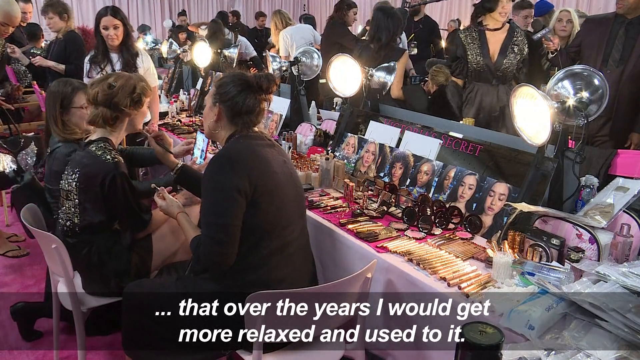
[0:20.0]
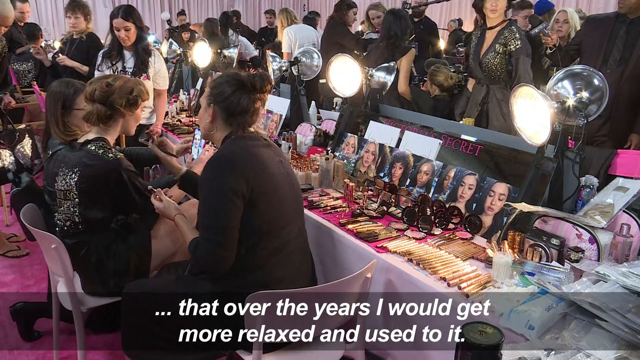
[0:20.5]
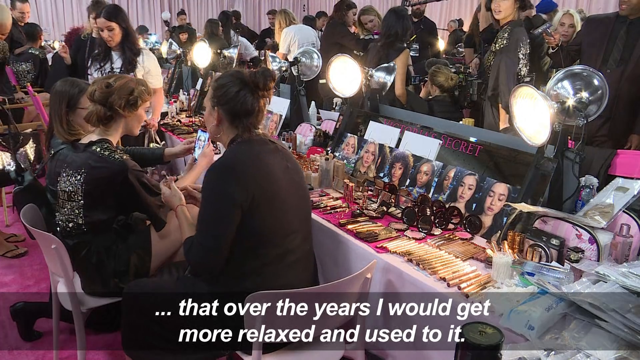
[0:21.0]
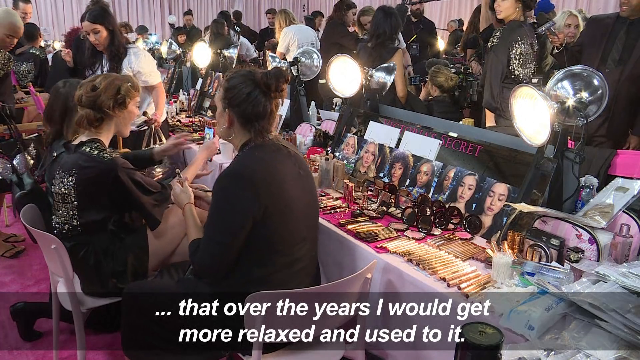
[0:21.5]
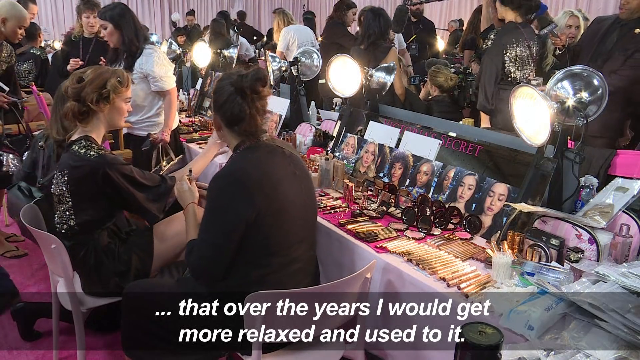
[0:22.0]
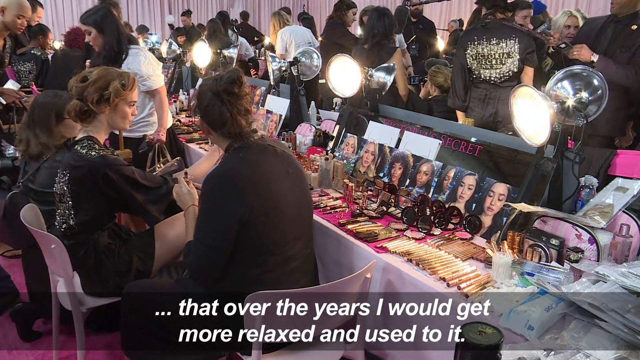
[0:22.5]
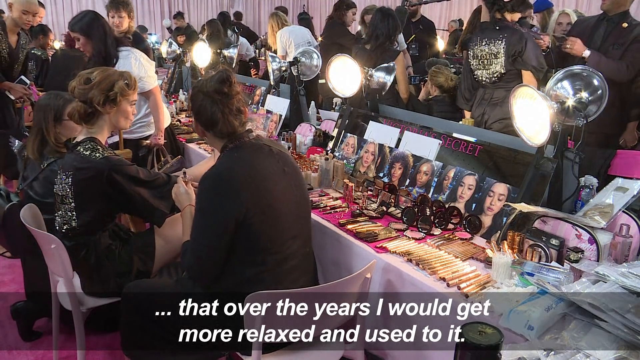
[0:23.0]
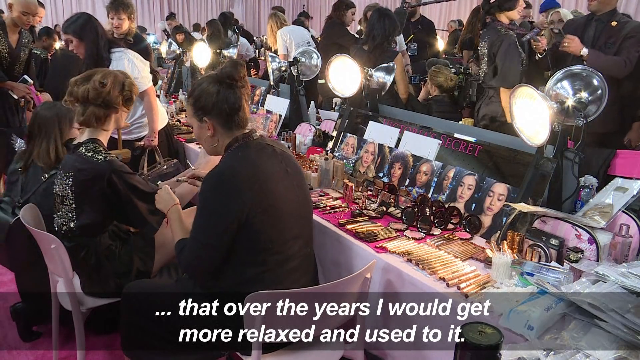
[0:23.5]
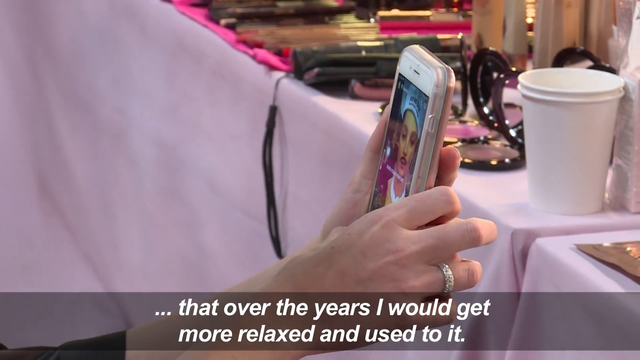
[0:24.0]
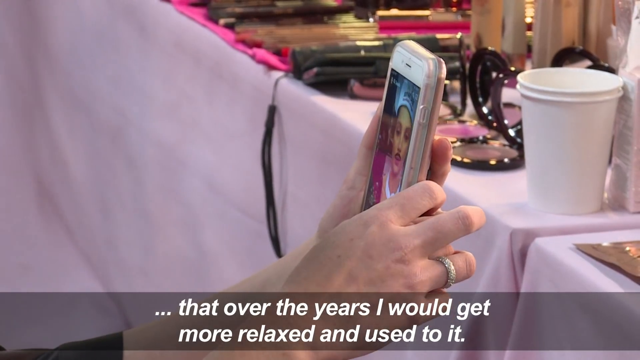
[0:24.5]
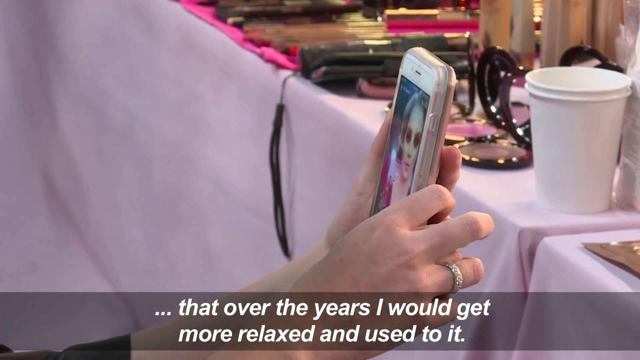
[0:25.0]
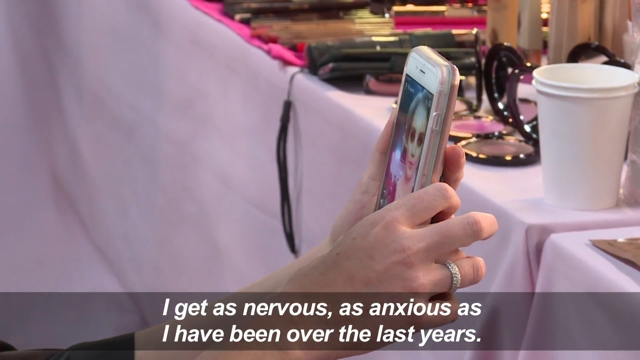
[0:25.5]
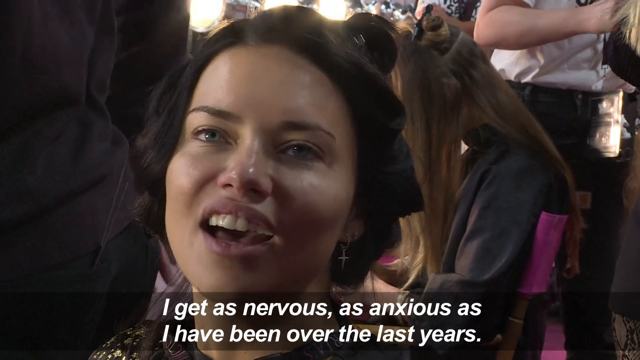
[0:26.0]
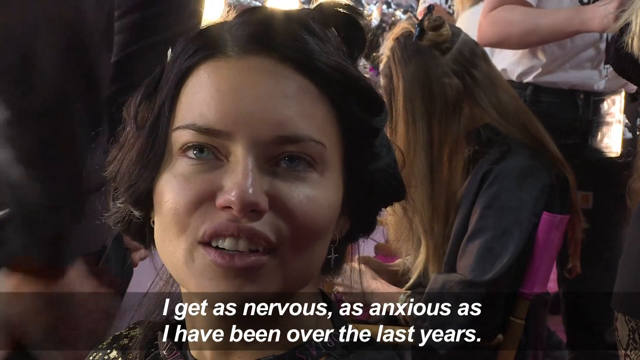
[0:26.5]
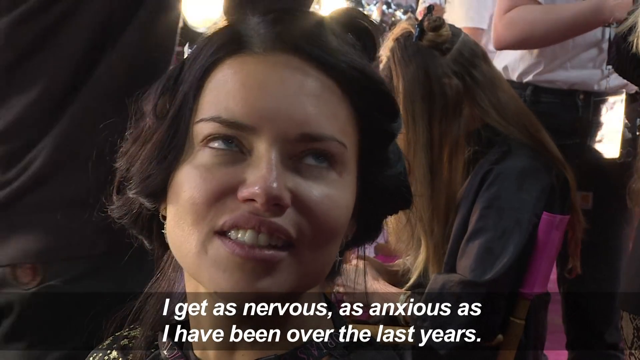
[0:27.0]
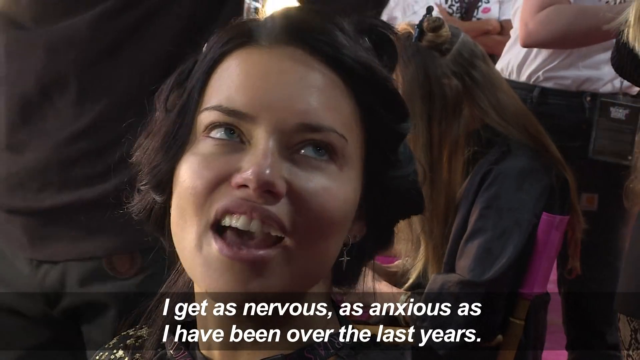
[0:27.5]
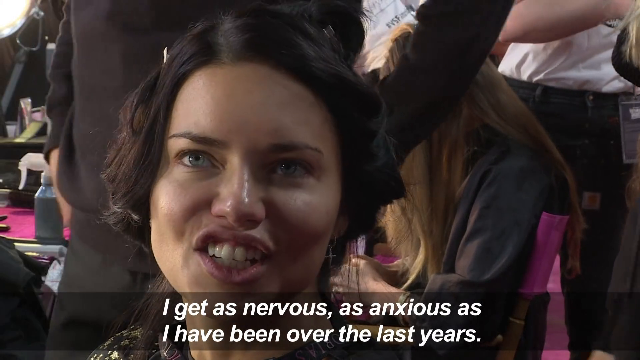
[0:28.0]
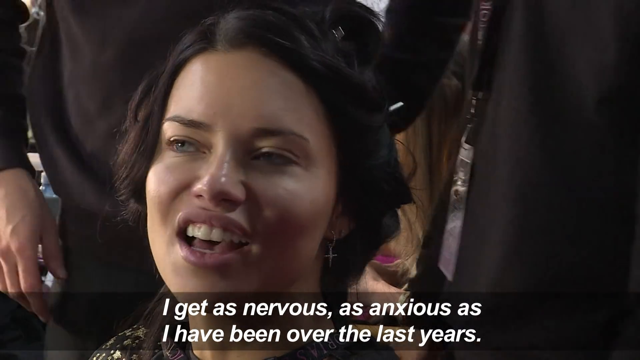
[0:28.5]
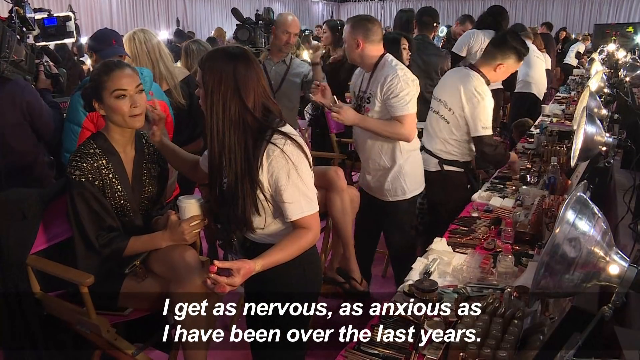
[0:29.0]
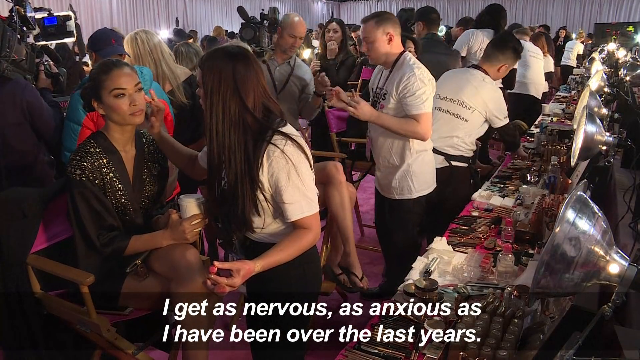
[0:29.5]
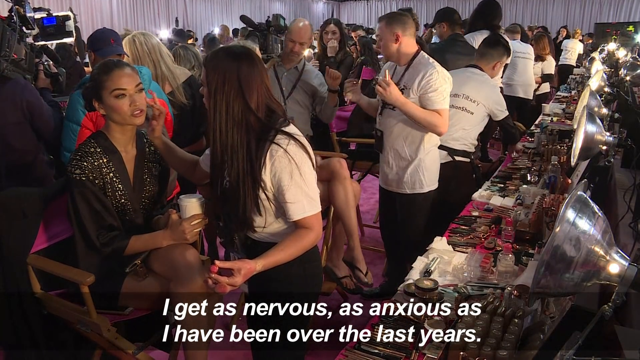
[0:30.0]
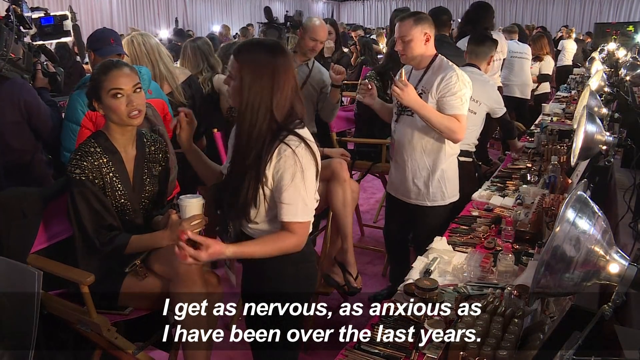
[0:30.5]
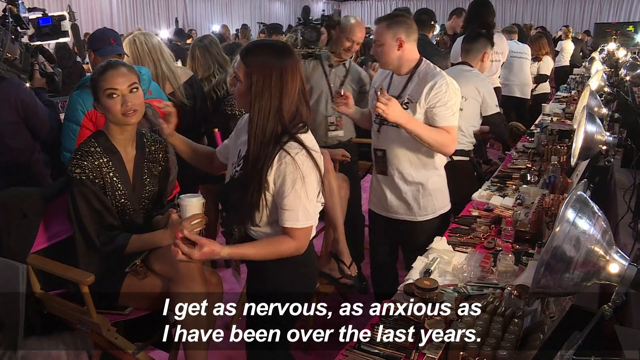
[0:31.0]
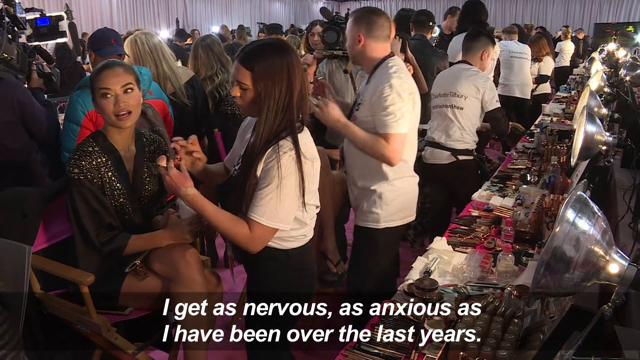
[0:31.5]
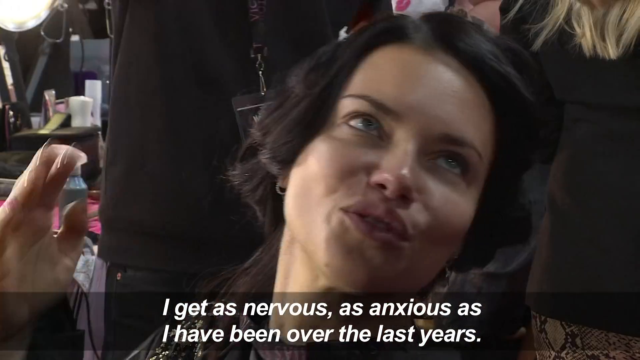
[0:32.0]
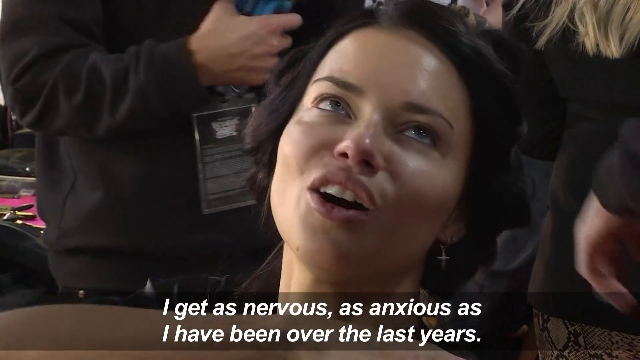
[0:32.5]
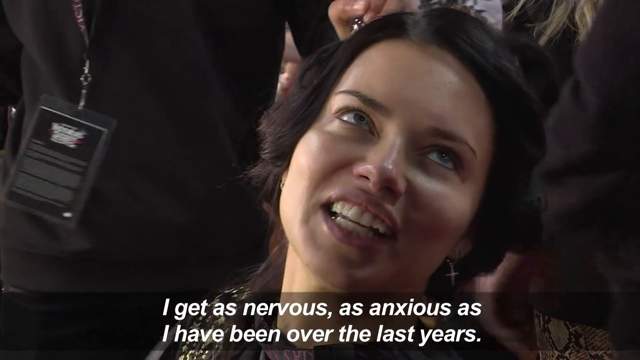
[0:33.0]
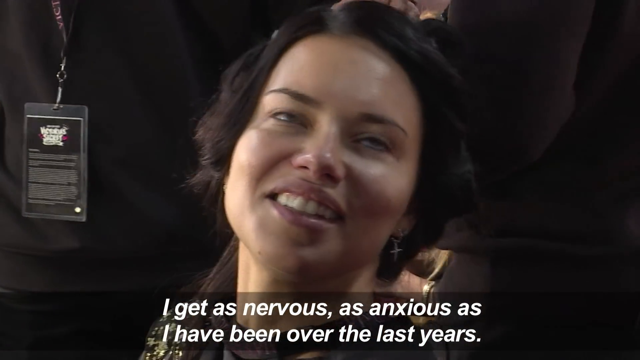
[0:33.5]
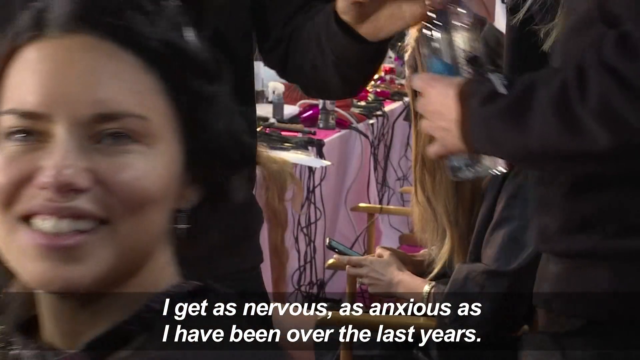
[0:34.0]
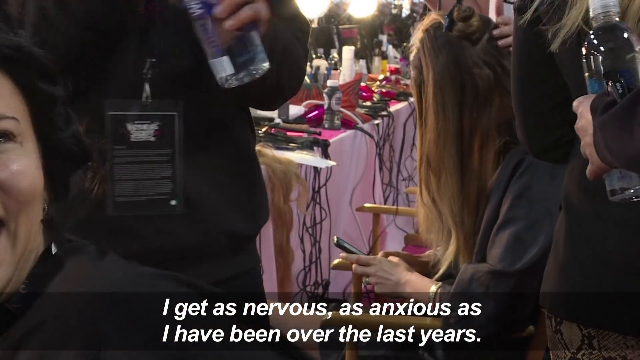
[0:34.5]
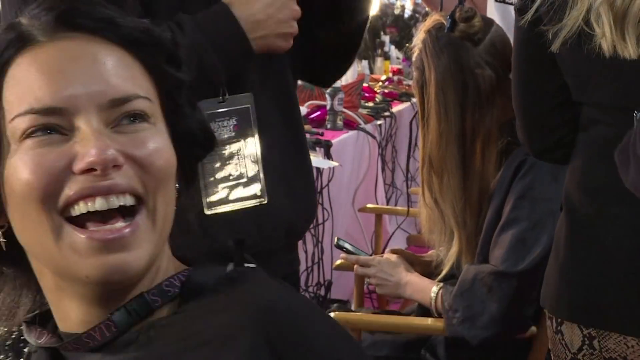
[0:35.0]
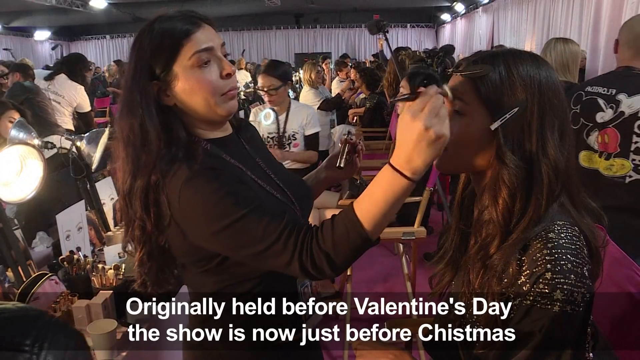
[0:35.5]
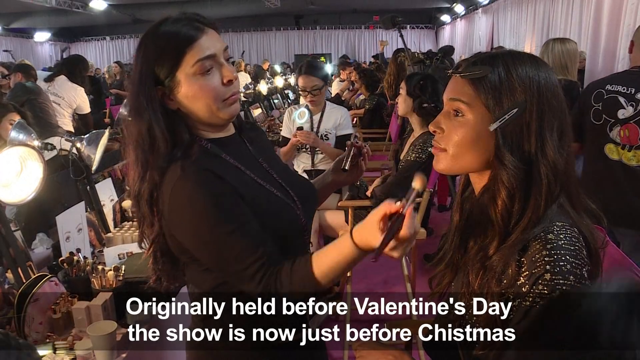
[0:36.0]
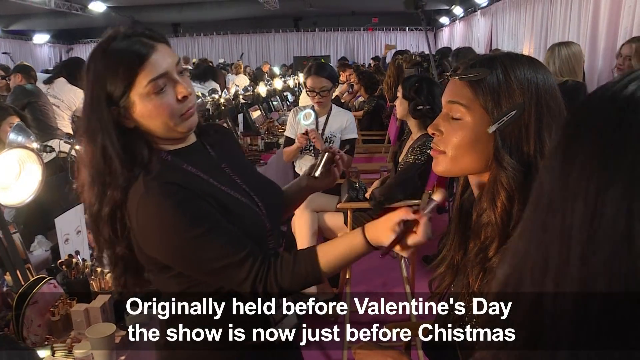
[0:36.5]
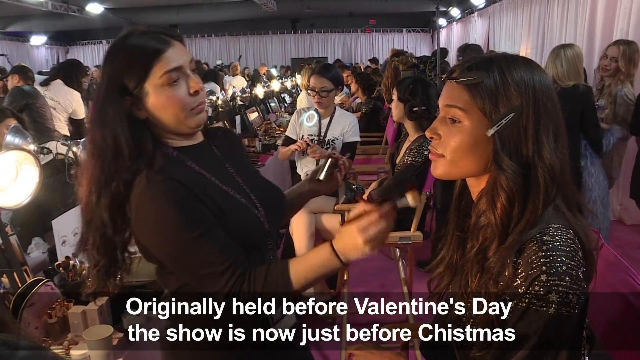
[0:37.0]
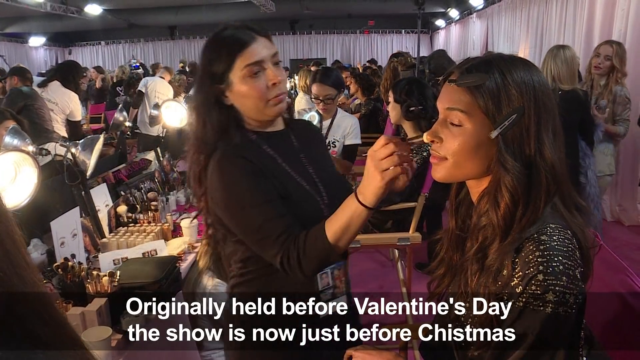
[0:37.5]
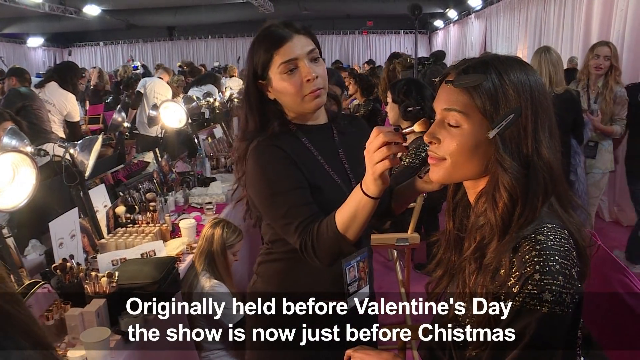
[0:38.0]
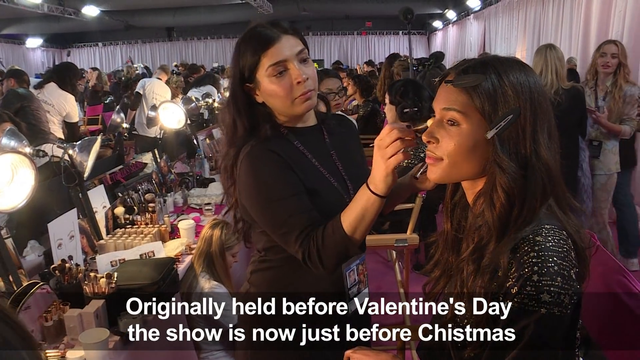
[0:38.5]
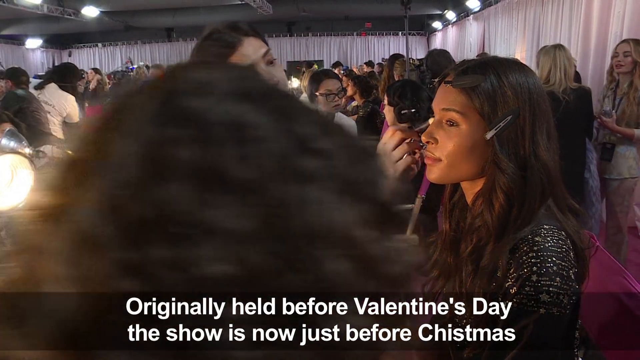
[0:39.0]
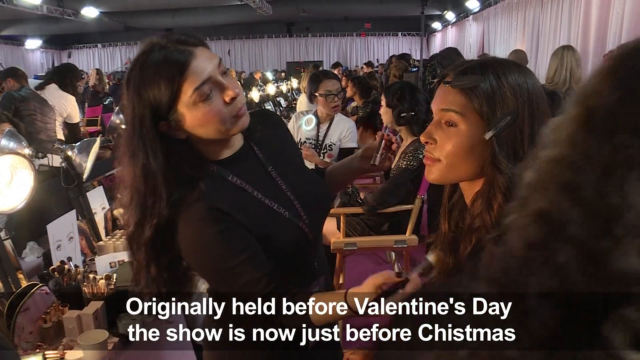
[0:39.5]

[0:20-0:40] In the makeup area, the subtitle continues: "I really thought that over the years I will get more relaxed and used to it." The woman who is talking is also having her makeup done, and she says, "I get as nervous, as anxious as I have been over the last years when I am doing this." The makeup artists are men wearing white t-shirts and black pants and women wearing black dresses. They say the show was originally held before Valentine's Day and is now just before Christmas. In front of the makeup artists are a few pictures of faces to choose makeup from. There are makeup kits, mirrors, makeup lights and glitter, and everyone is busy doing someone's makeup. Many young women are present, people are carrying makeup brushes and makeup tools, and right in front of them are lipstick, makeup and many other items.